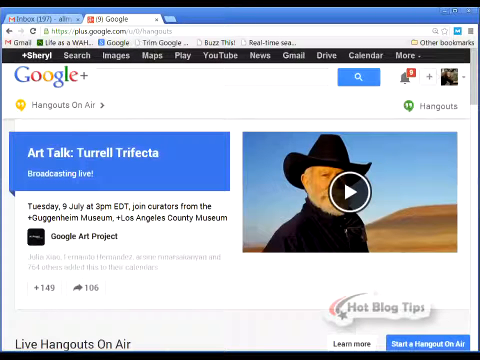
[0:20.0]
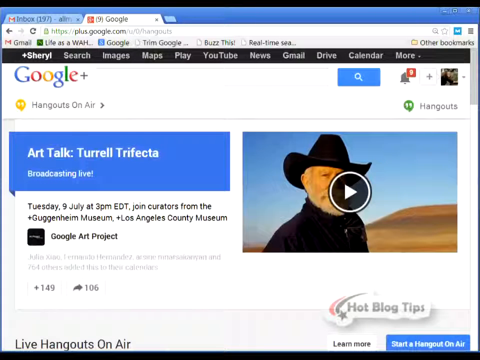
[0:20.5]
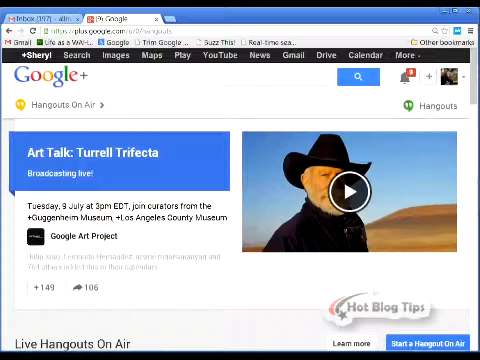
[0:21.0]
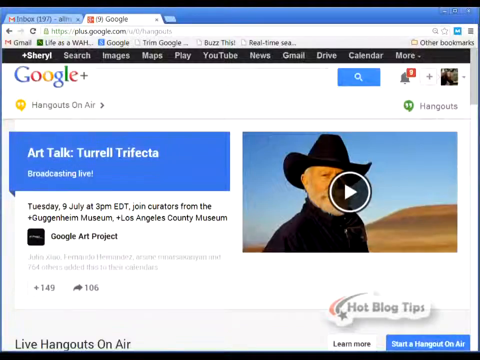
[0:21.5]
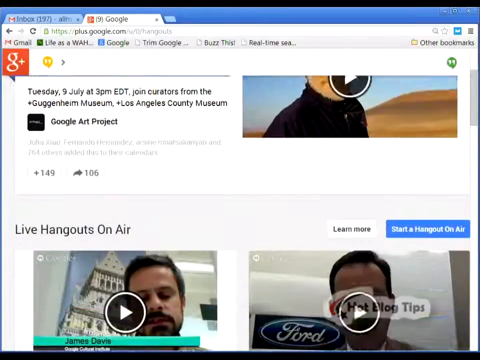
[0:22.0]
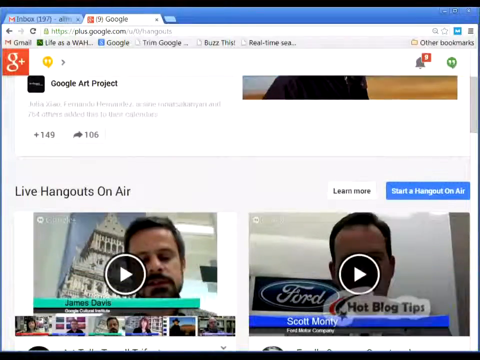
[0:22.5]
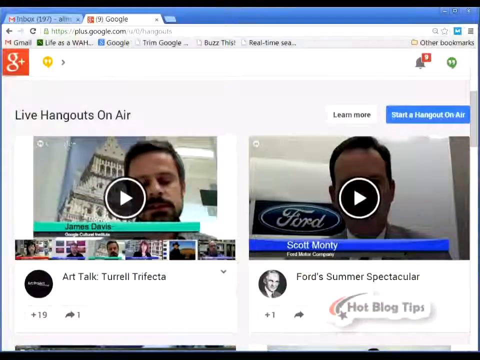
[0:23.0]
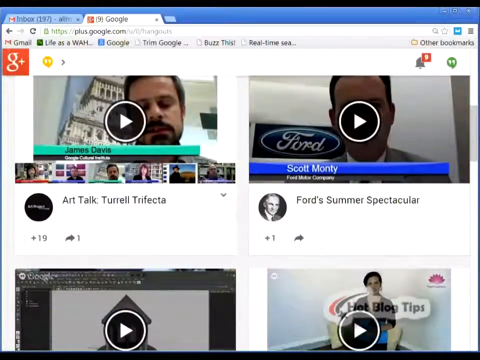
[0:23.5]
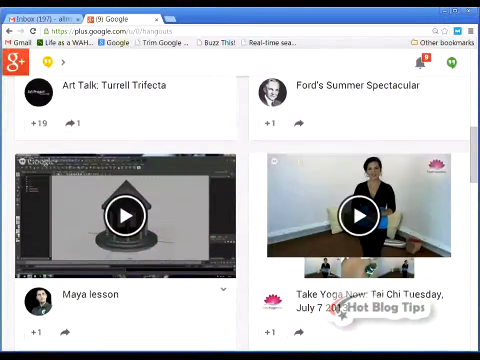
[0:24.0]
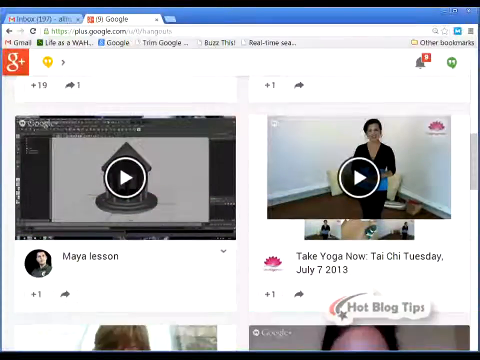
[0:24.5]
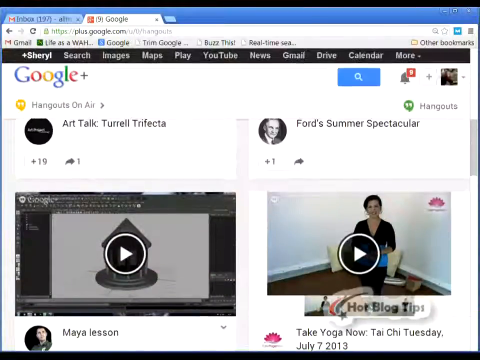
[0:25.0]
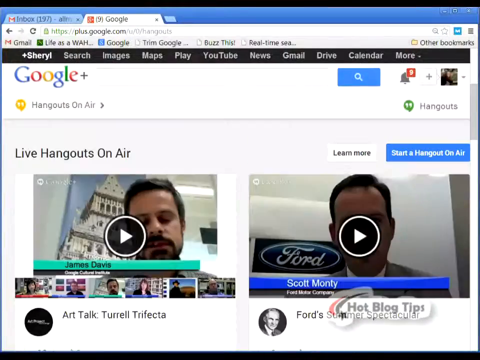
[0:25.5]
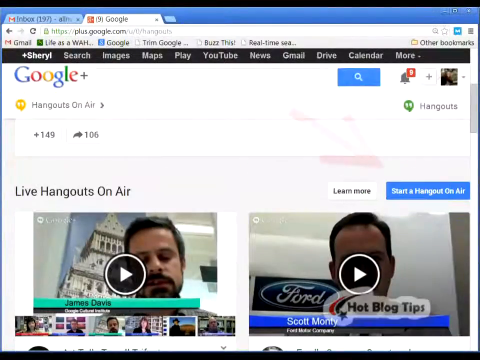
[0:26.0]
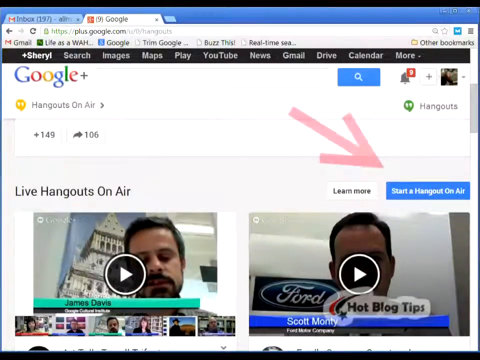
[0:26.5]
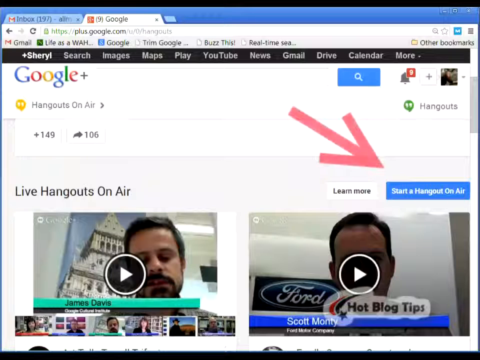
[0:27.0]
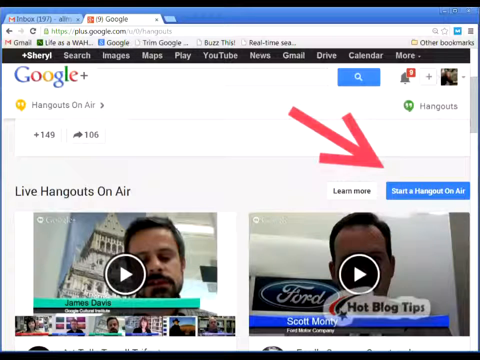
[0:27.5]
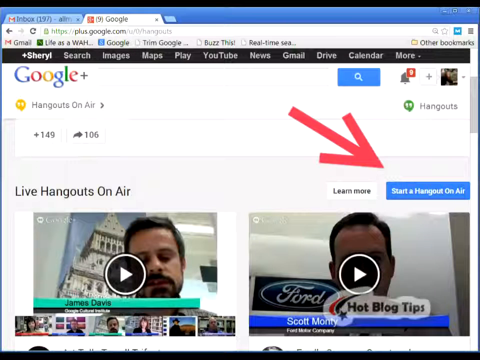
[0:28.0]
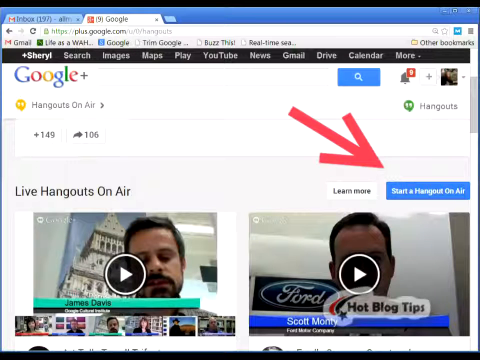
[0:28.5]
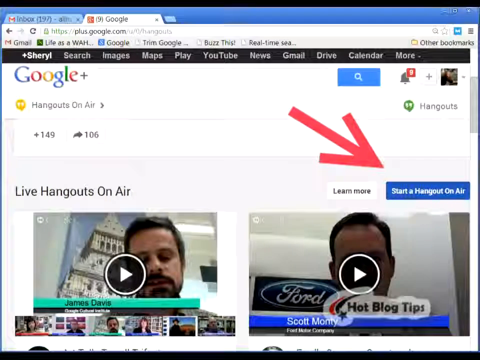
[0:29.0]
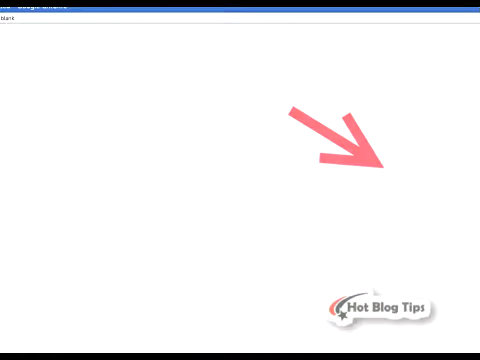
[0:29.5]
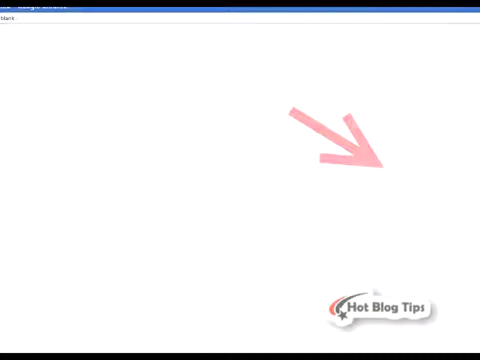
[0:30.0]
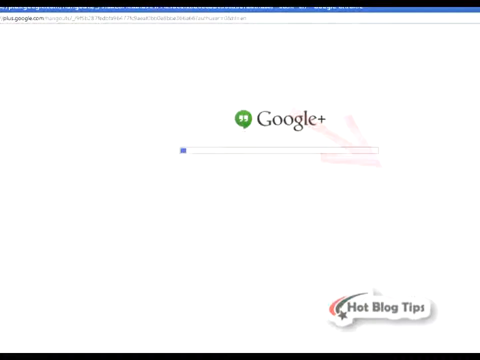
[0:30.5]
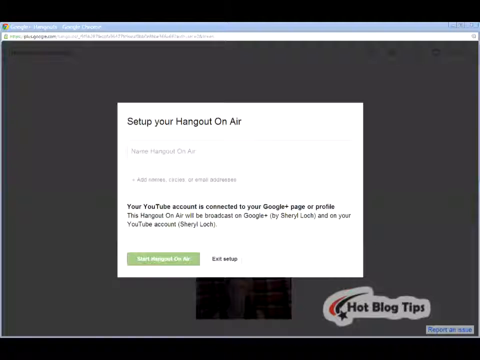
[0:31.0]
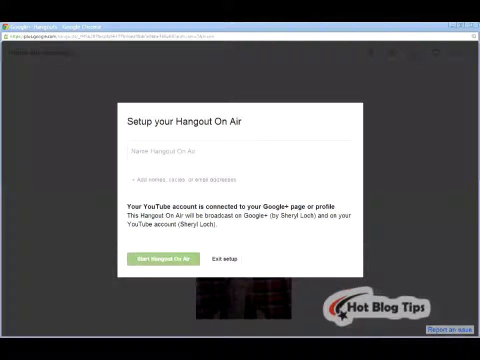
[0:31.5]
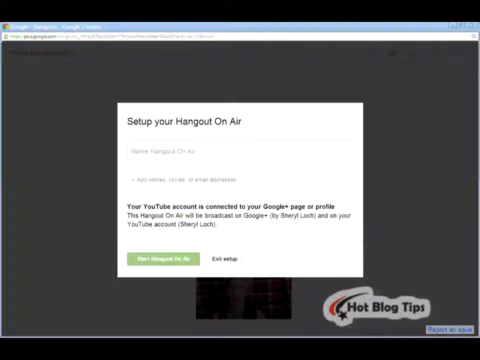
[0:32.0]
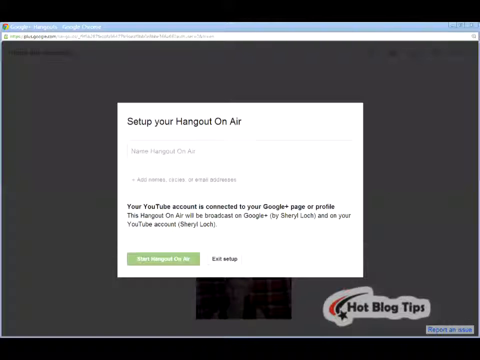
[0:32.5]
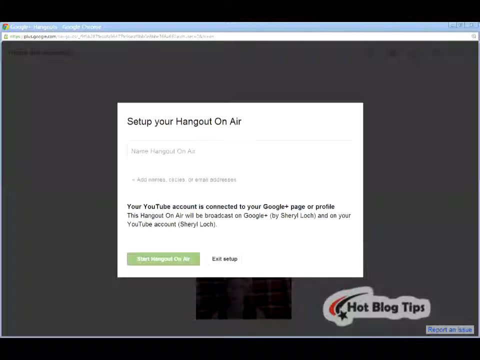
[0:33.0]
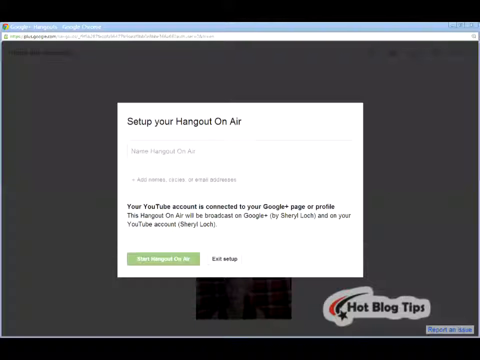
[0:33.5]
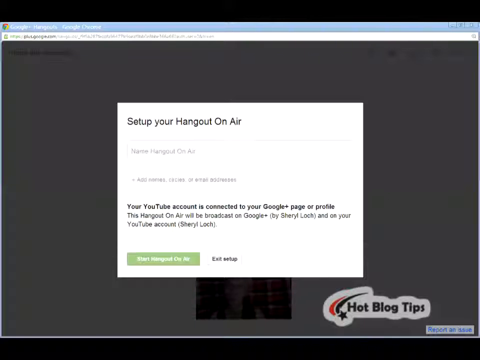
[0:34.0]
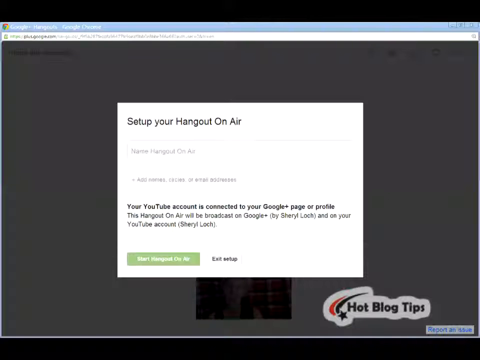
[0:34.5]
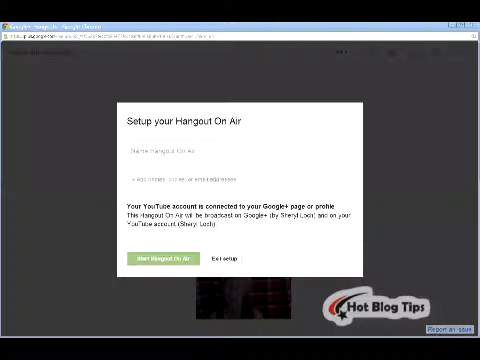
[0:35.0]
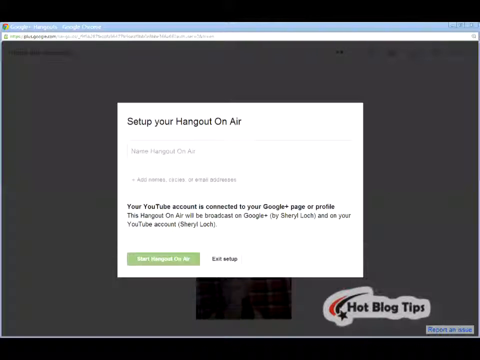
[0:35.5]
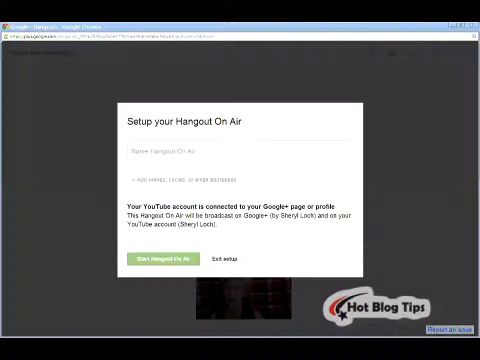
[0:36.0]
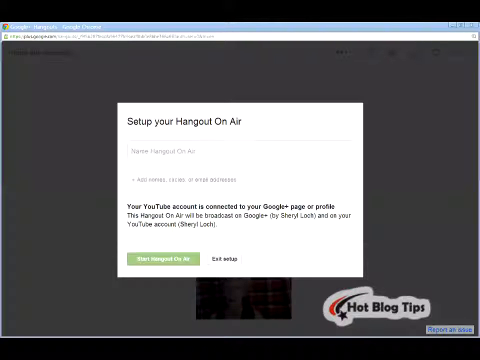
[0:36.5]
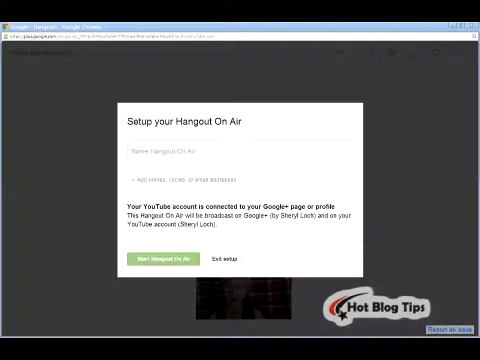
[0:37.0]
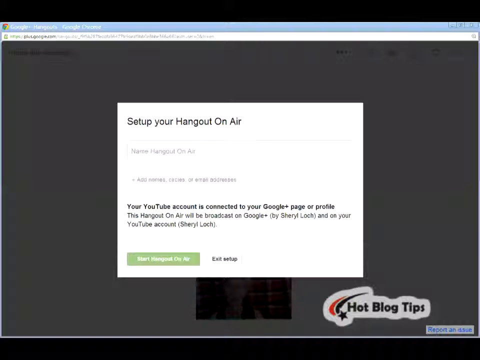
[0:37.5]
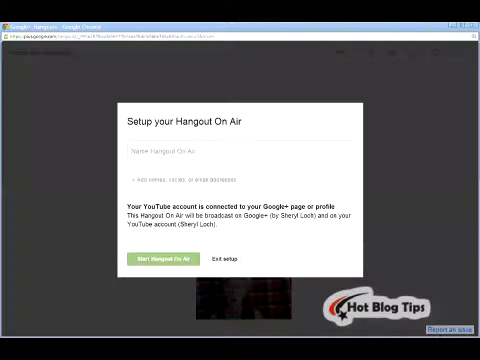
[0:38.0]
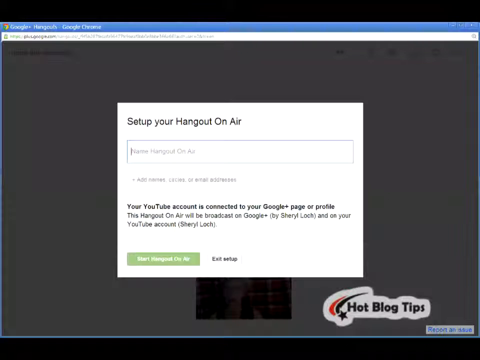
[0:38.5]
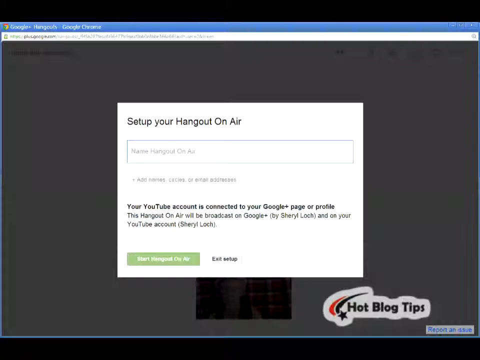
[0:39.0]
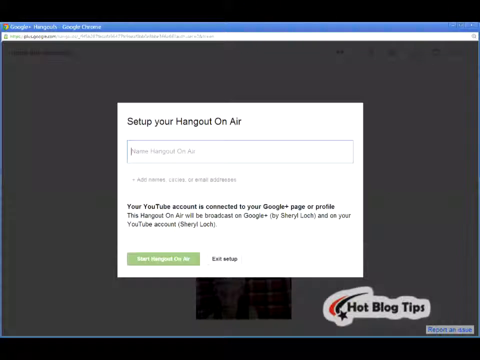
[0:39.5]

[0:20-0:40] The page shows a talk show scheduled for Tuesday, July 9th at 3 p.m. Eastern Time, featuring Turrell Trifecta. The page scrolls down to show more existing events, with choices like Ford Summer, Tai Chi, talks and other items. The view then switches to a screen that says "hot blog tips," with a red arrow pointing to the bottom right. The button "set up your hangout on air" is clicked, and a pop-up window appears reading "set up your Hangout On Air." It has input text boxes for the name and for the invitees' email addresses or names, probably Google names. A message at the bottom says the Google YouTube account is connected to the Google page and profile. At the very bottom are a confirmation button and an "Exit Setup" button.